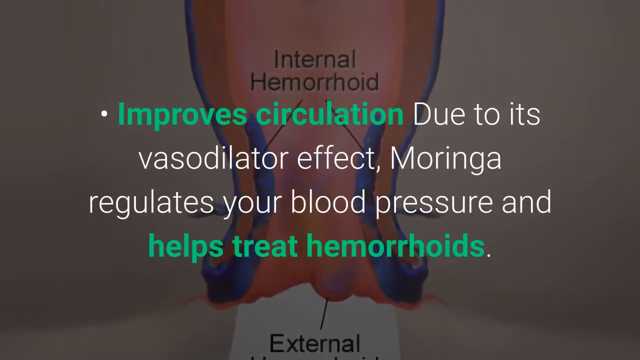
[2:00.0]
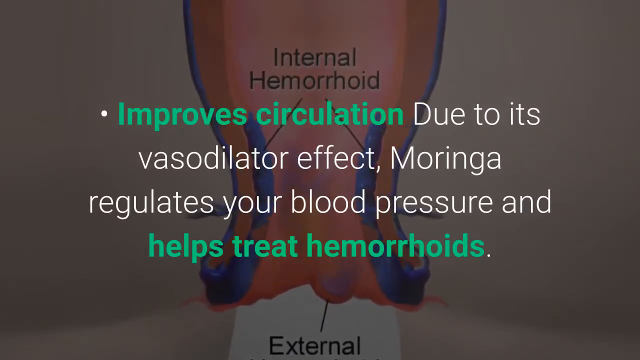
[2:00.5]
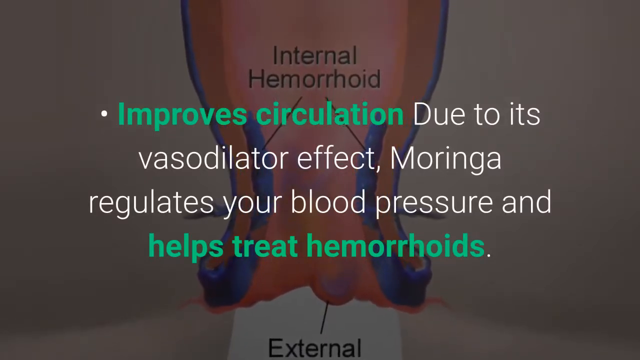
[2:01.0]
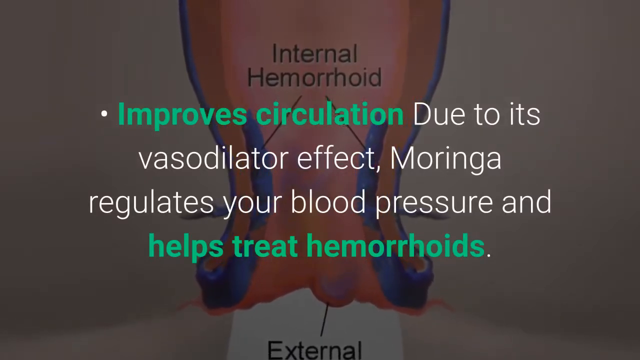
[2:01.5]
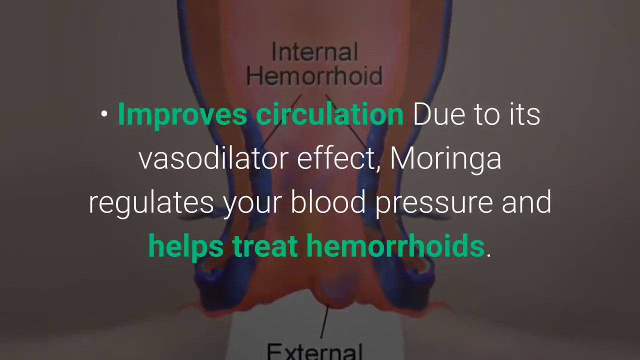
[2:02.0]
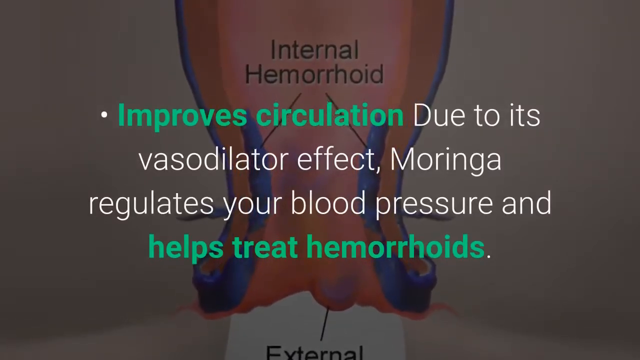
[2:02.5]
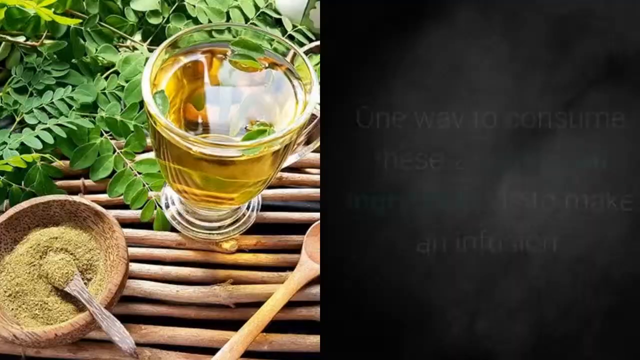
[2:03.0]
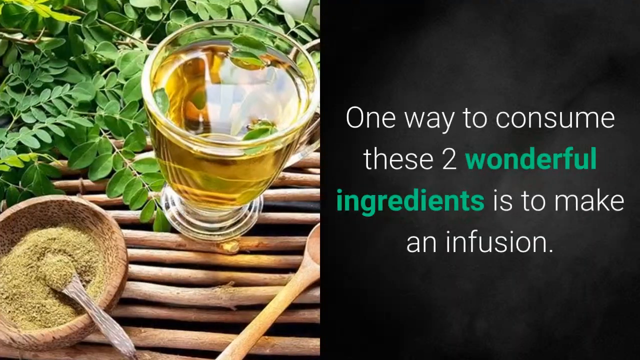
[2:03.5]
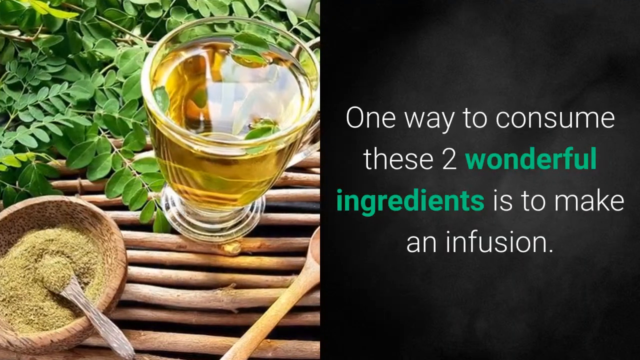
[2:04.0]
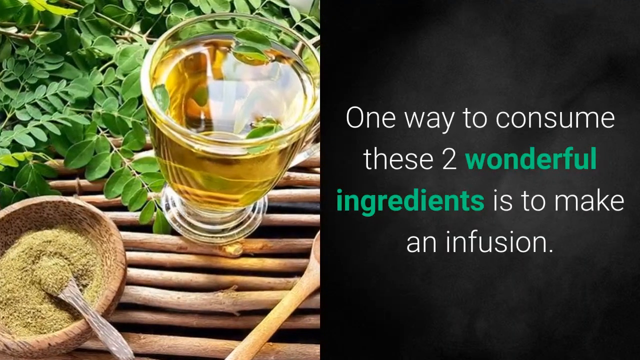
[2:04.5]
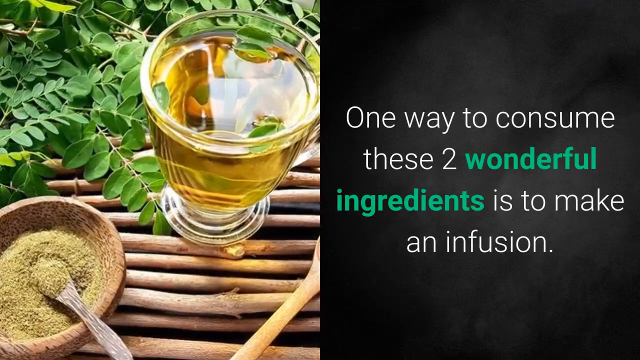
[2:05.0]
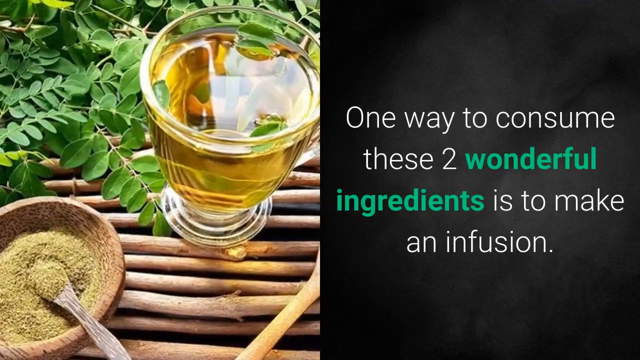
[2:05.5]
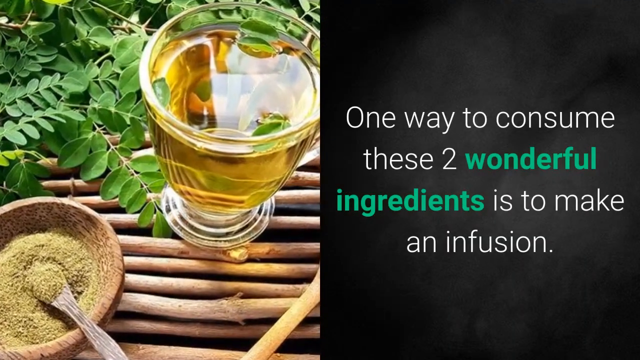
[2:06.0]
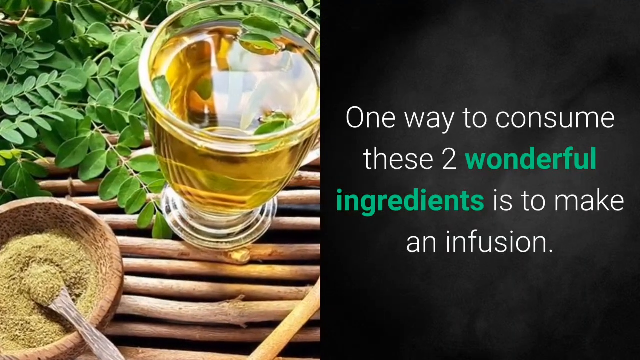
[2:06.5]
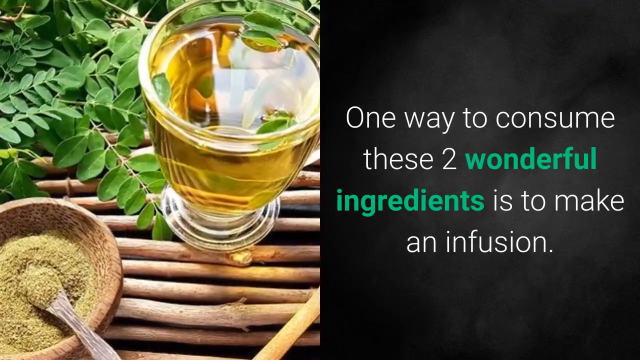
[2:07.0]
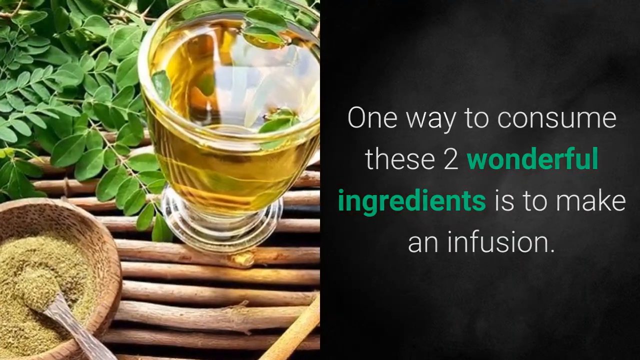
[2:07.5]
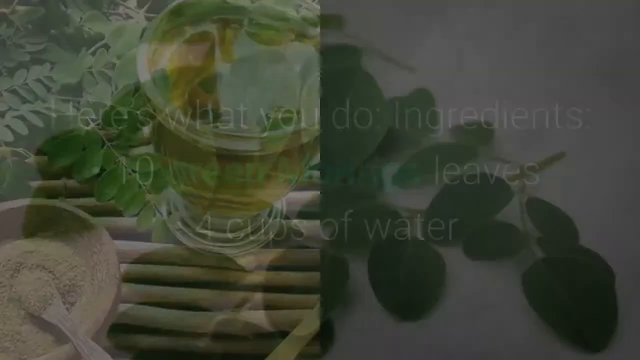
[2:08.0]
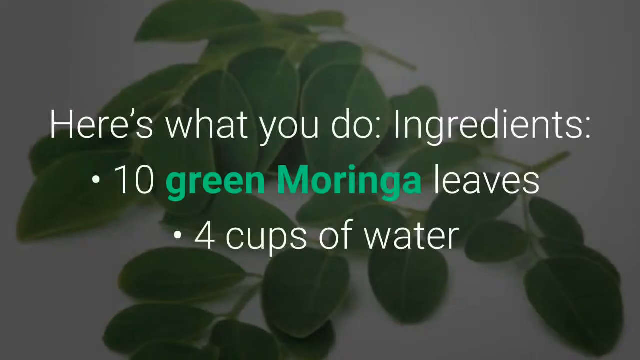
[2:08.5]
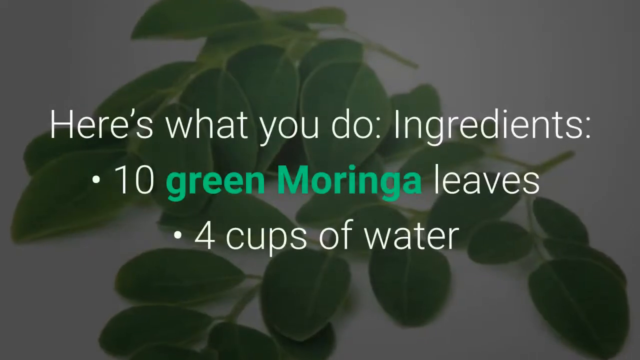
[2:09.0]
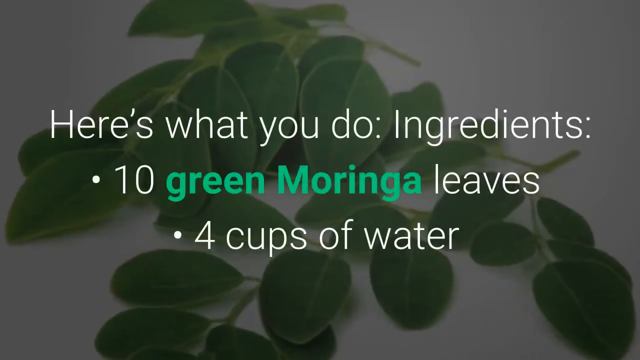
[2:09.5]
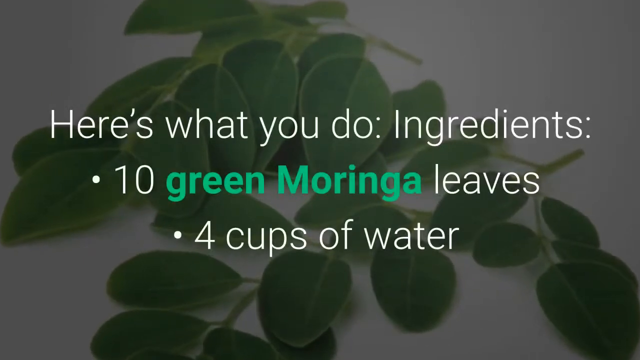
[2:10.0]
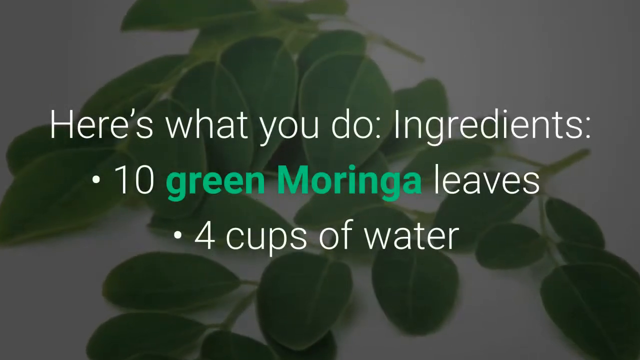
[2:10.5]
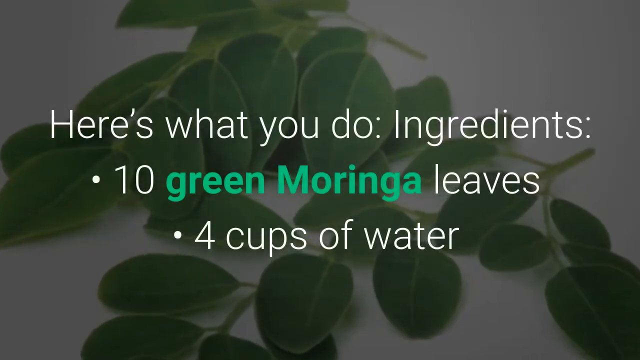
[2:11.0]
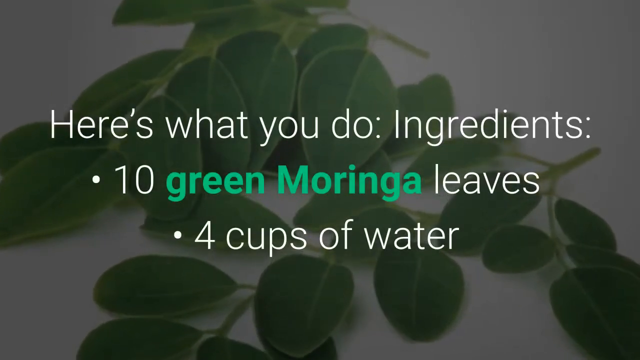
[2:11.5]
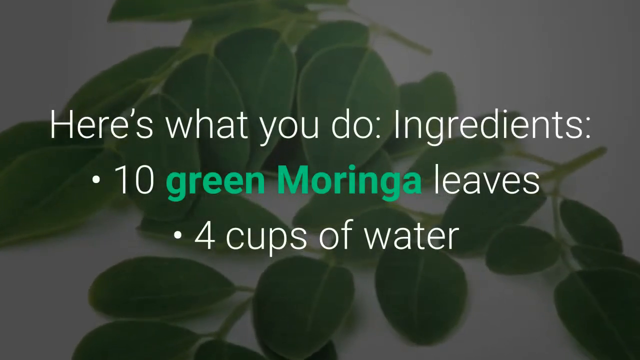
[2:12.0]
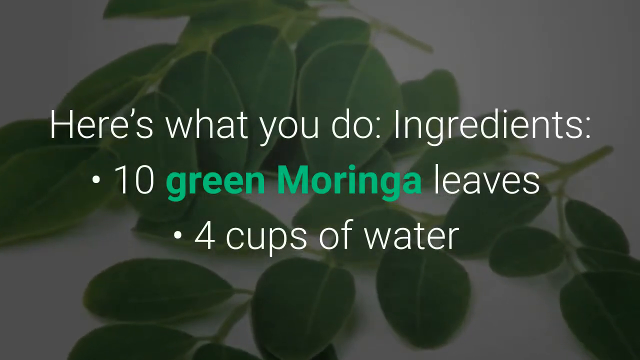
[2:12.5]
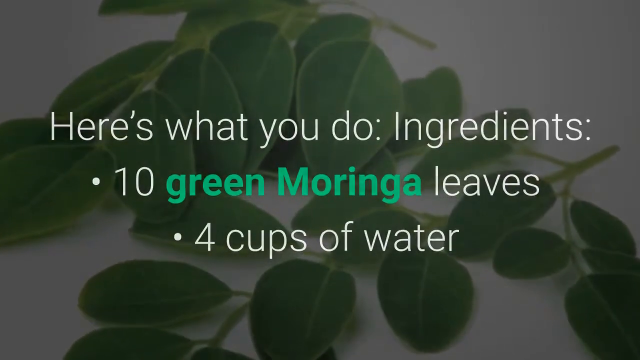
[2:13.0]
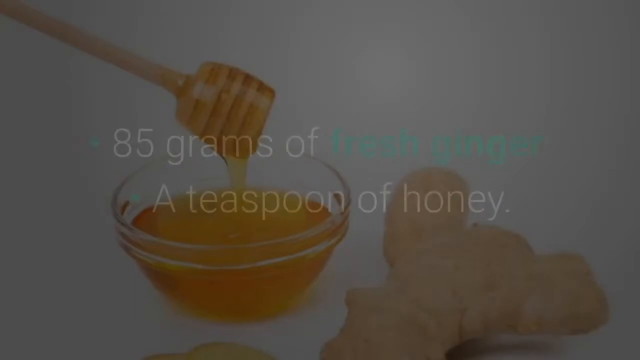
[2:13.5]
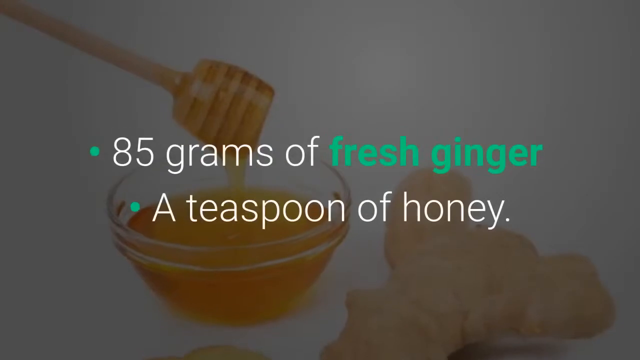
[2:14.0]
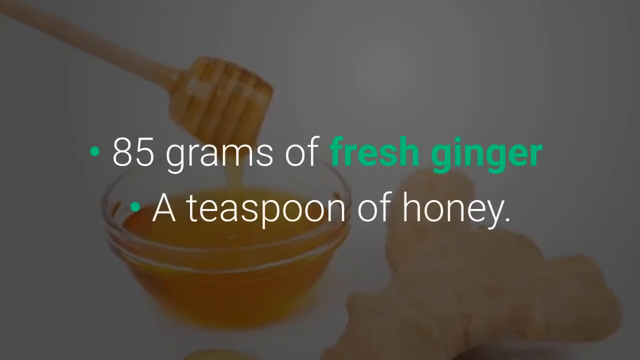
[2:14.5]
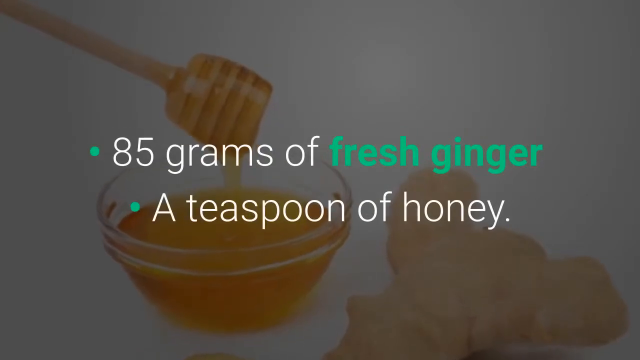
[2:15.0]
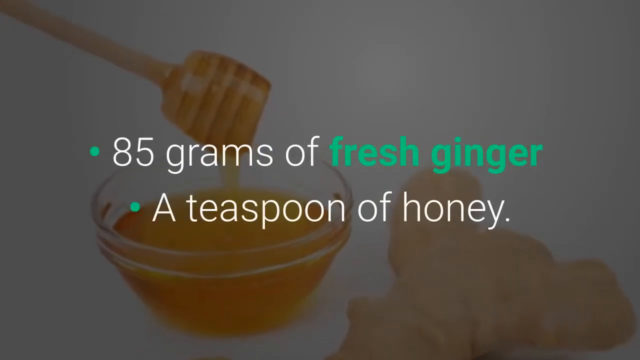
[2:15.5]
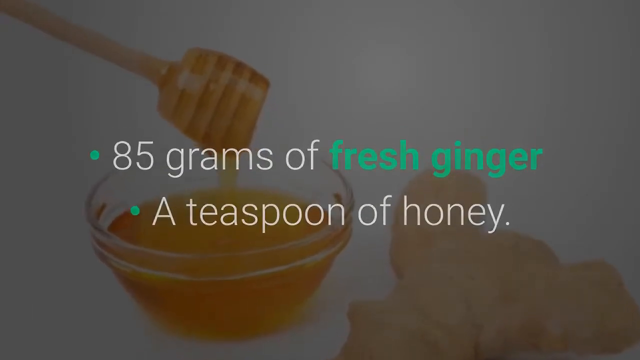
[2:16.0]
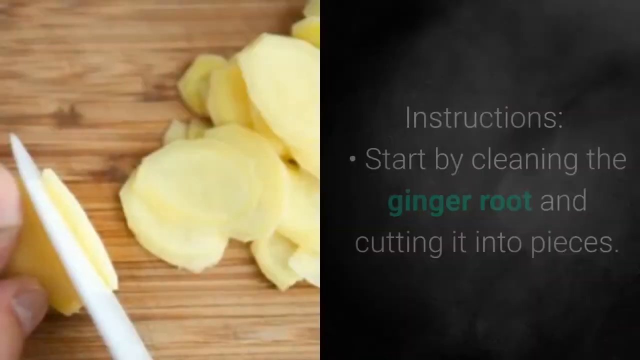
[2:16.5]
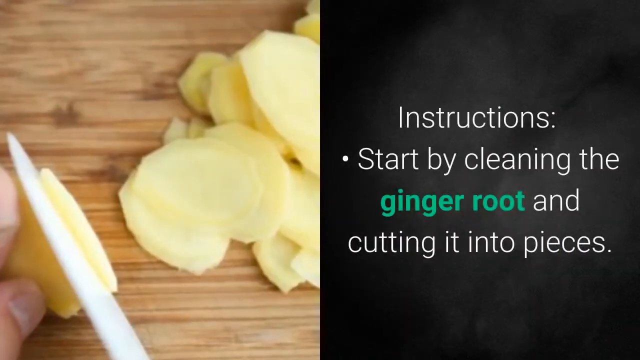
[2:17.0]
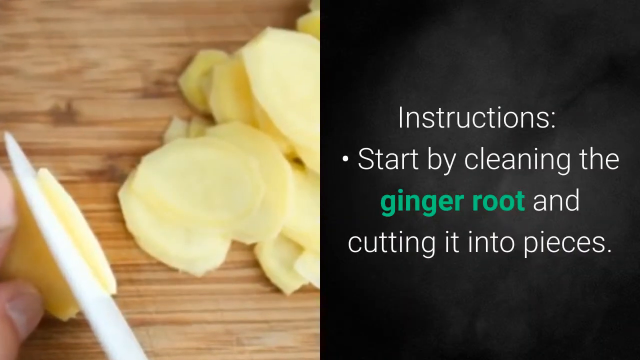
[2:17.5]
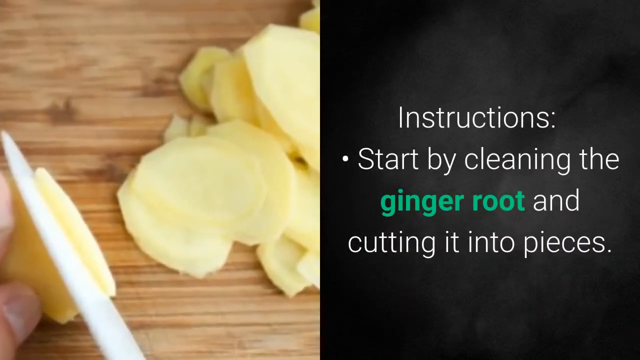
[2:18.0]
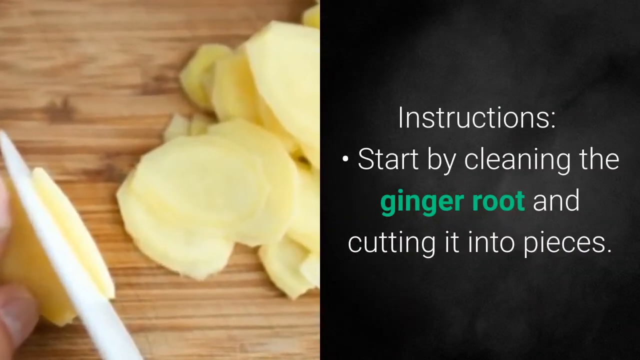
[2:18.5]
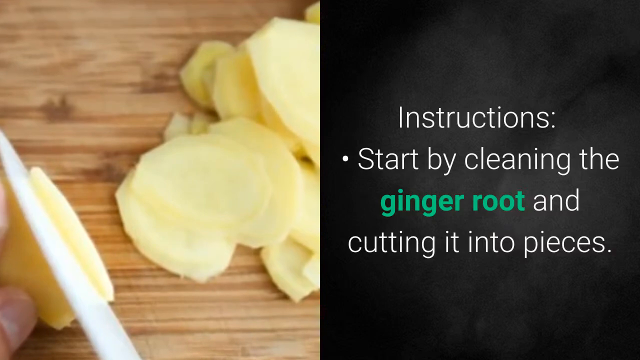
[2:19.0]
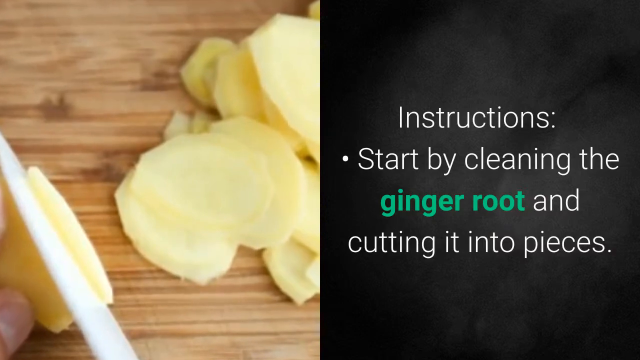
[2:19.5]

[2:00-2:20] Cartoon diagrams show the difference between an internal hemorrhoid and an external hemorrhoid. Text says "one way to consume these two wonderful ingredients is to make an infusion," listing 10 green moringa leaves, 4 cups of water, 85 grams of fresh ginger, and honey. The instructions begin with cleaning the ginger root and cutting it into pieces. Text also says it has a vasodilator effect, and that moringa regulates blood pressure and helps to treat hemorrhoids.